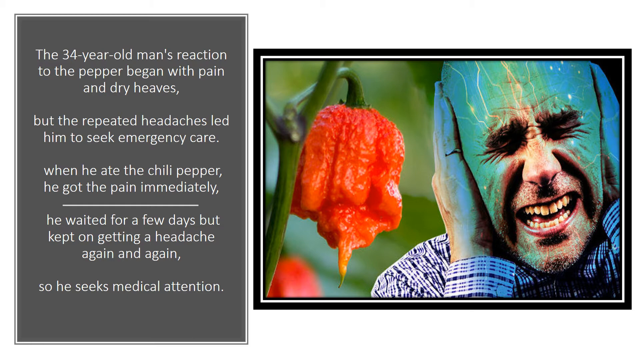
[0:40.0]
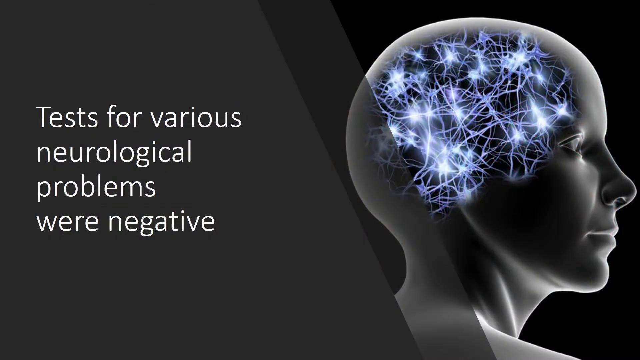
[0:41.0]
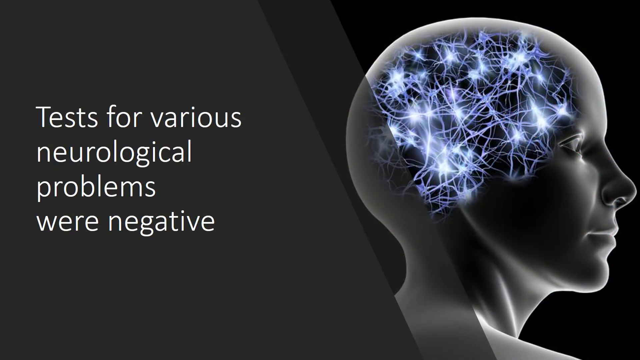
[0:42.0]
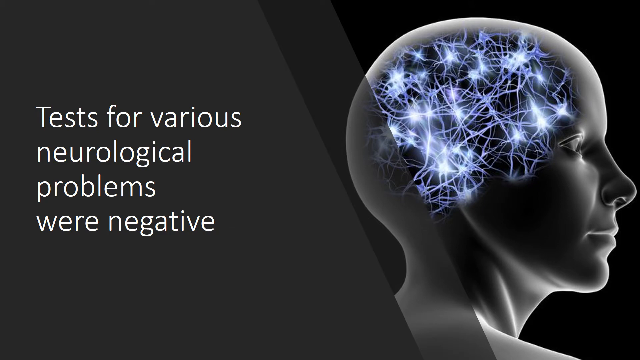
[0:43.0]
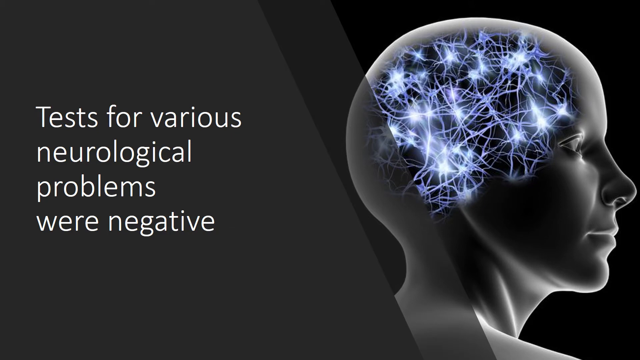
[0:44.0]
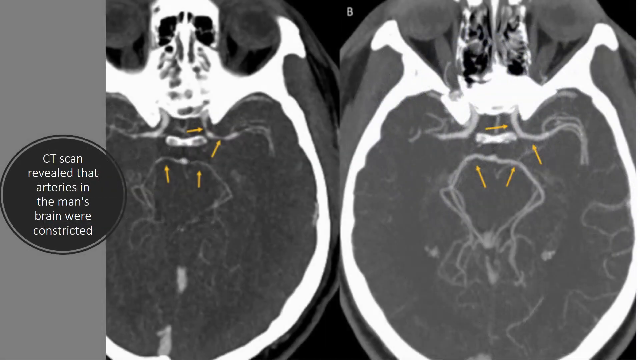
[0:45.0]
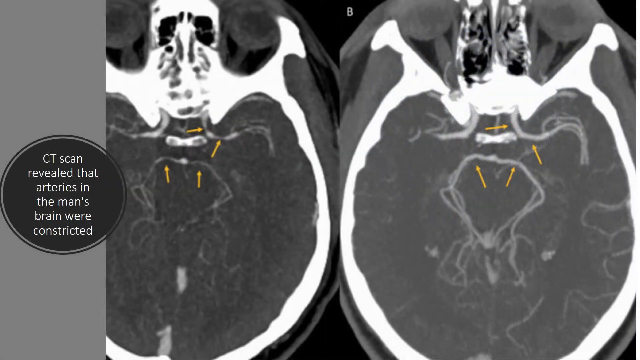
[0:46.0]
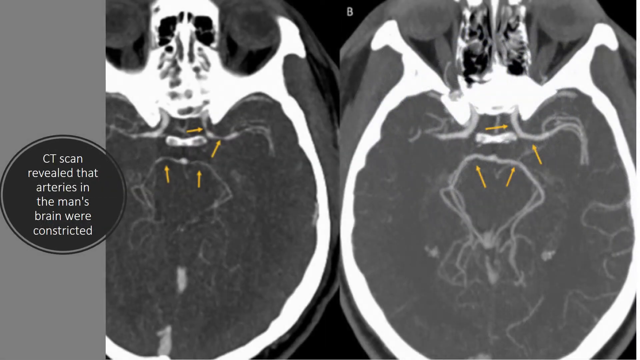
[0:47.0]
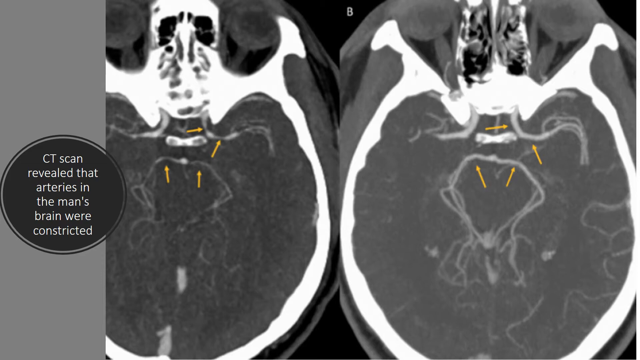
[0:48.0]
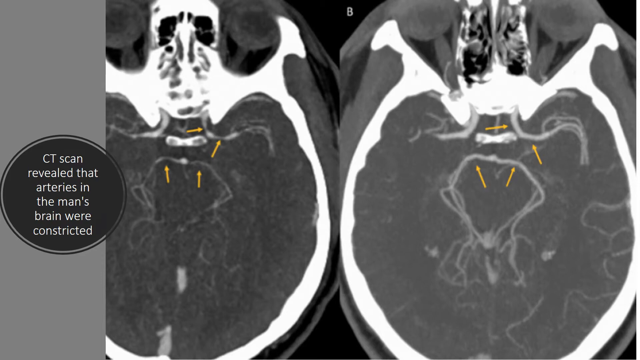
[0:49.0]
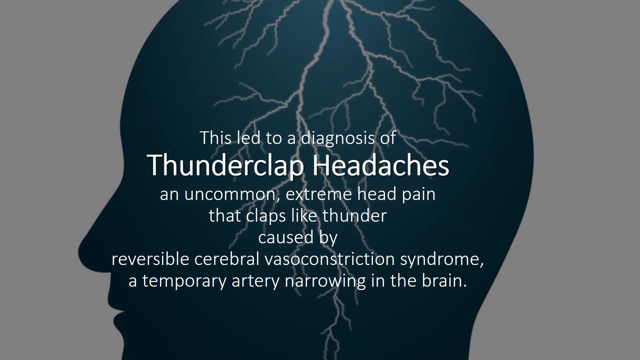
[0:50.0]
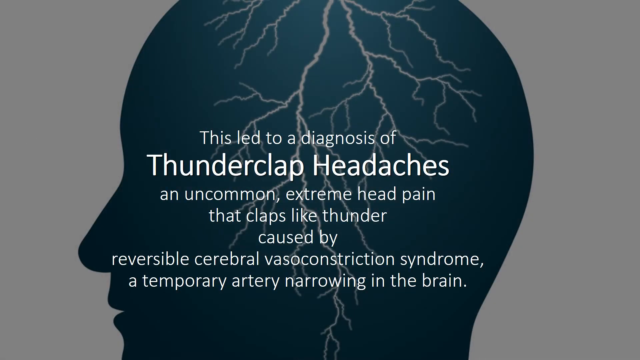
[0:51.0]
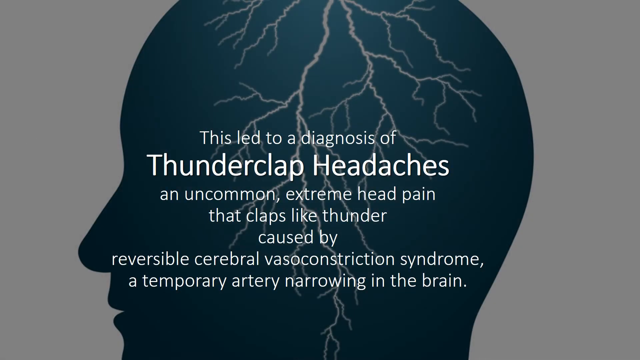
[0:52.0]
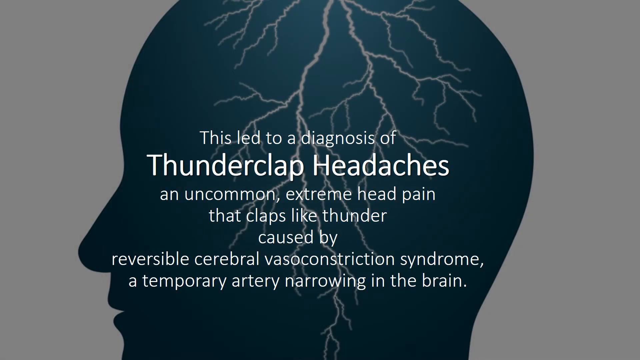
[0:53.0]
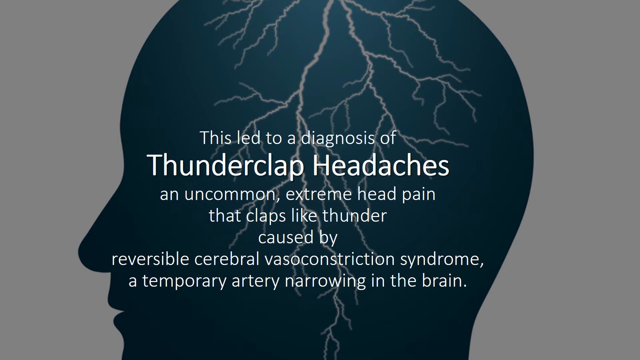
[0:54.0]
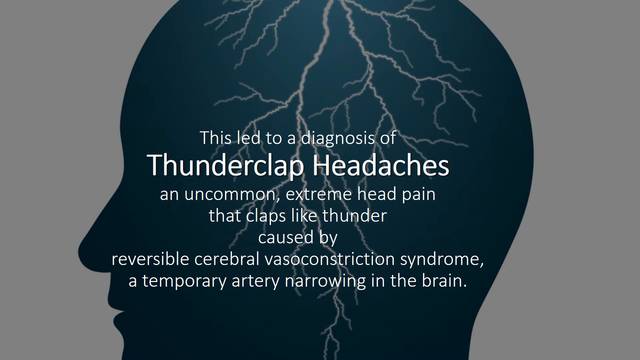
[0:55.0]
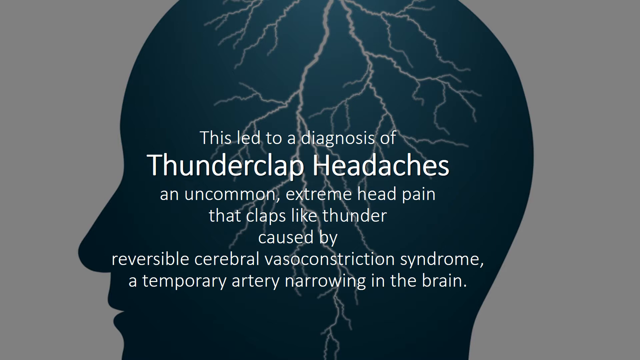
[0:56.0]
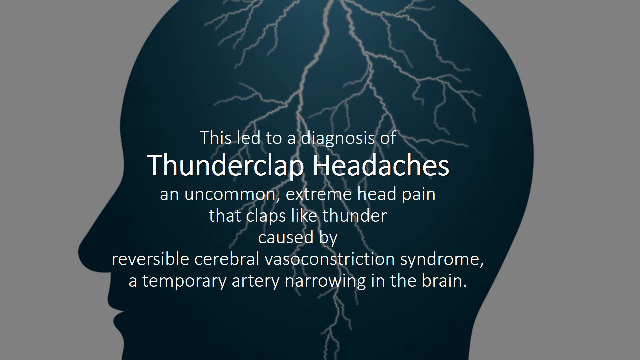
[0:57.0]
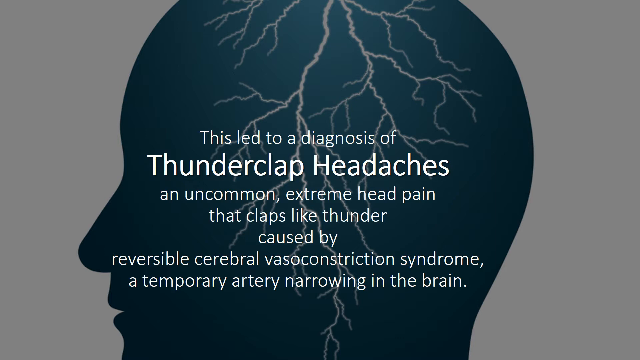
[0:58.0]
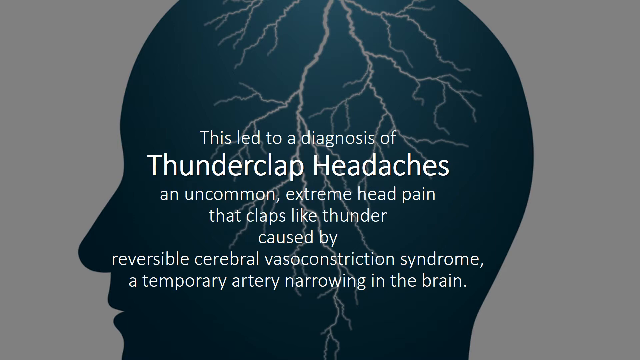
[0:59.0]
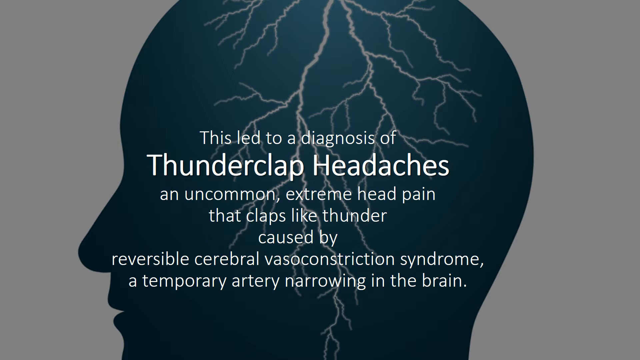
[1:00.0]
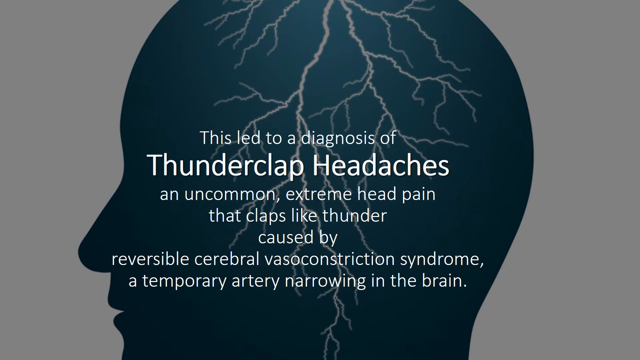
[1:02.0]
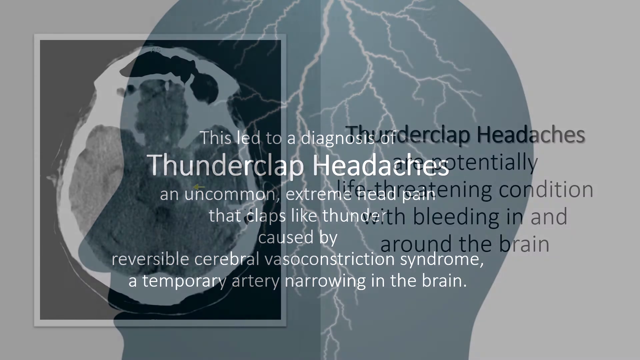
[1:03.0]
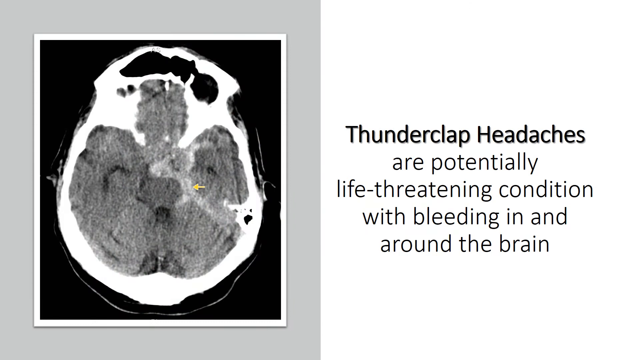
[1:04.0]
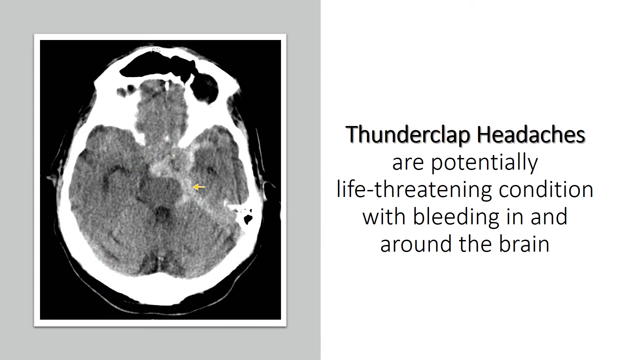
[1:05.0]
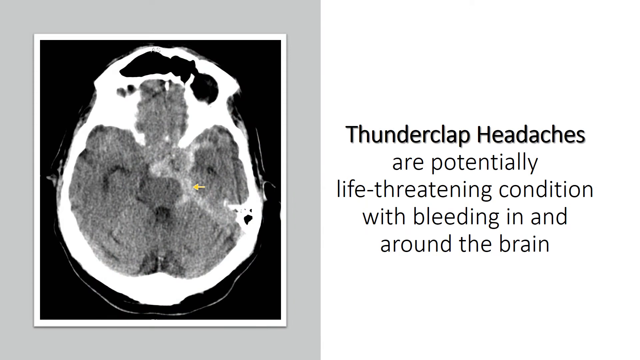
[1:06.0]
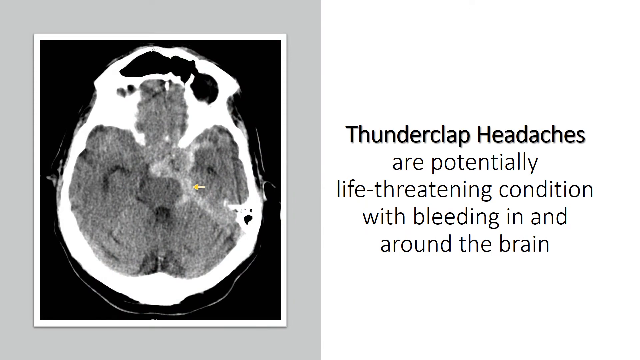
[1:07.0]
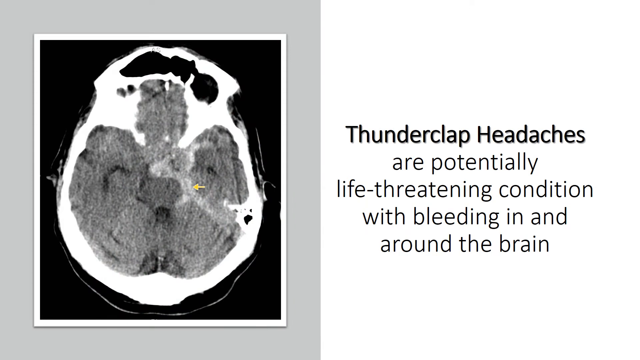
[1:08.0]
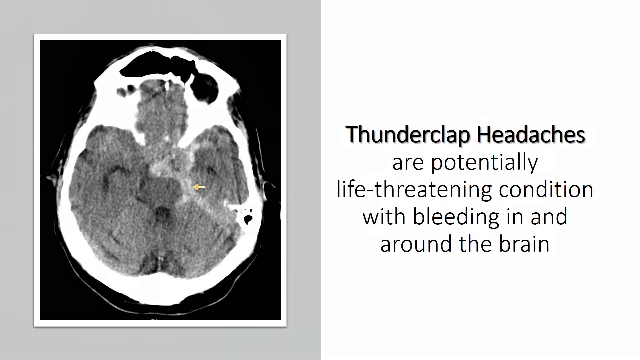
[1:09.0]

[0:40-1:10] The preceding slide is still in view, then it transitions to a slide with white text over a gray background on the left reading "test for various neurological problems were negative." On the right is a computer-generated image of the frame of a human skull, almost like a mannequin, with various light blue electrical signals and synapses firing inside. Next comes a CT scan image of the man's head, with text on the left reading "CT scan revealed that arteries in the man's brain were constricted." Another slide follows with text beginning "this led to a diagnosis of thunderclap headaches" and ending "a temporary artery narrowing in the brain."